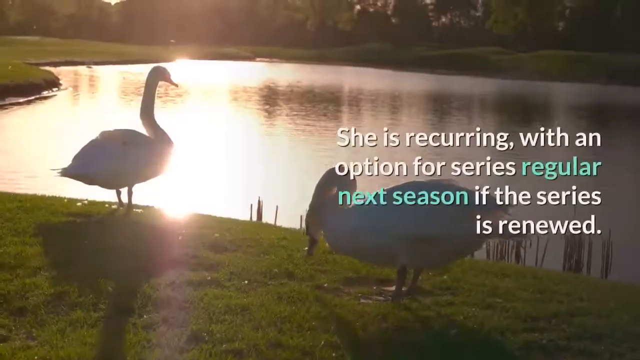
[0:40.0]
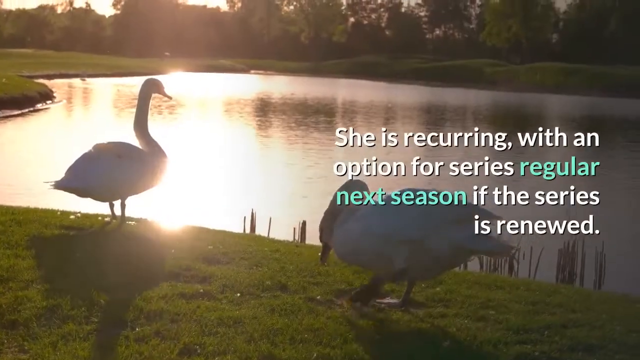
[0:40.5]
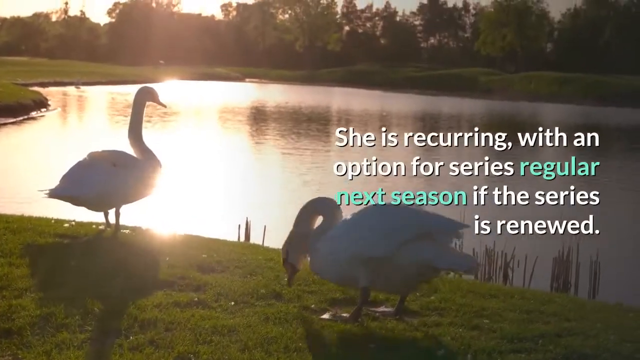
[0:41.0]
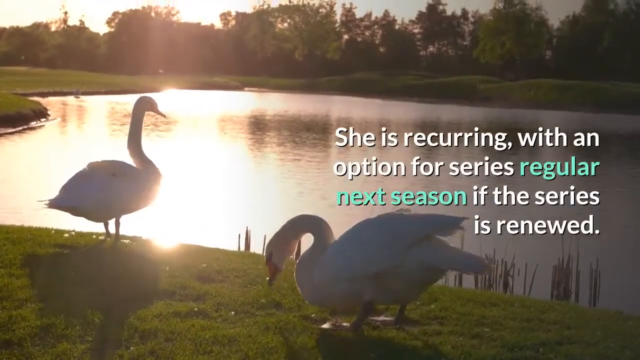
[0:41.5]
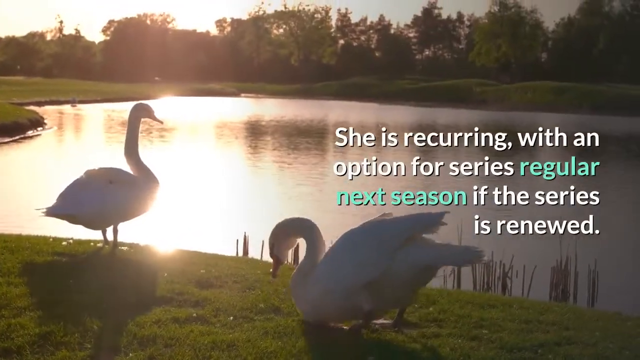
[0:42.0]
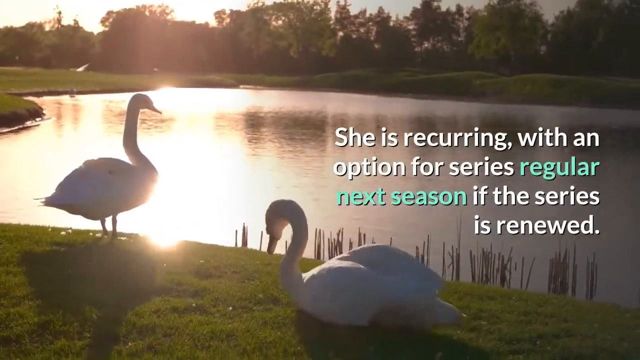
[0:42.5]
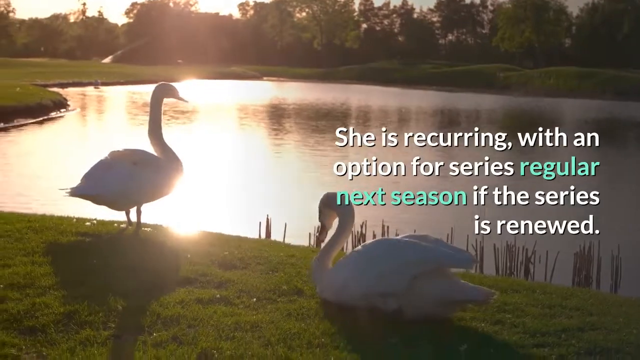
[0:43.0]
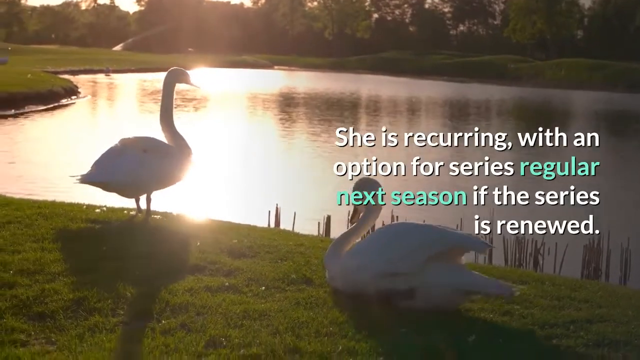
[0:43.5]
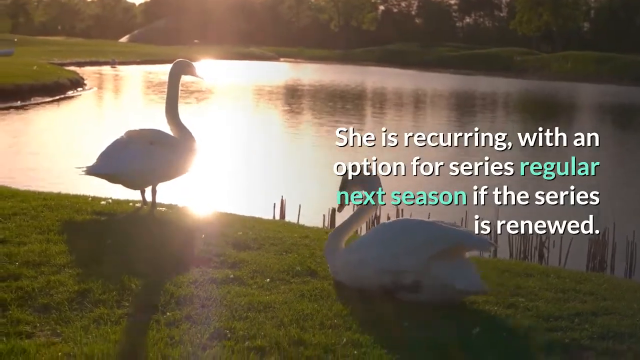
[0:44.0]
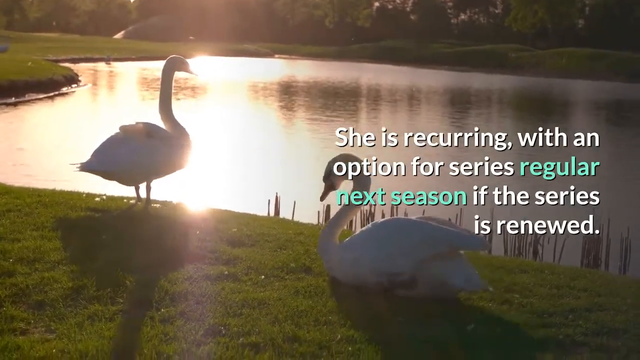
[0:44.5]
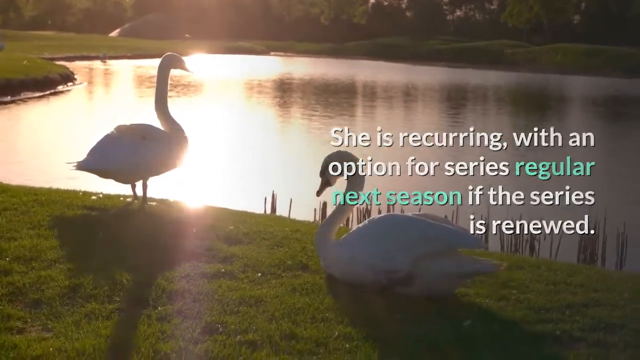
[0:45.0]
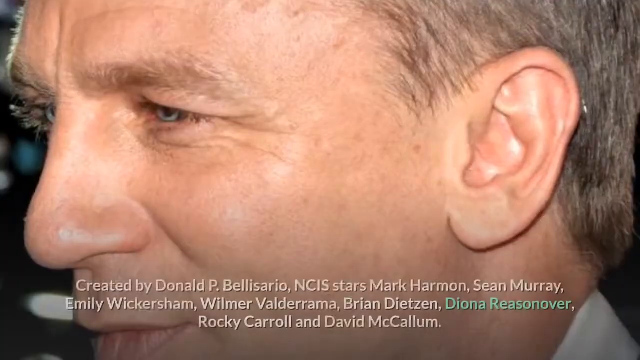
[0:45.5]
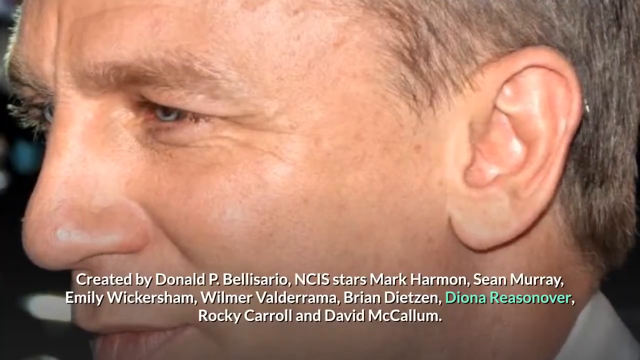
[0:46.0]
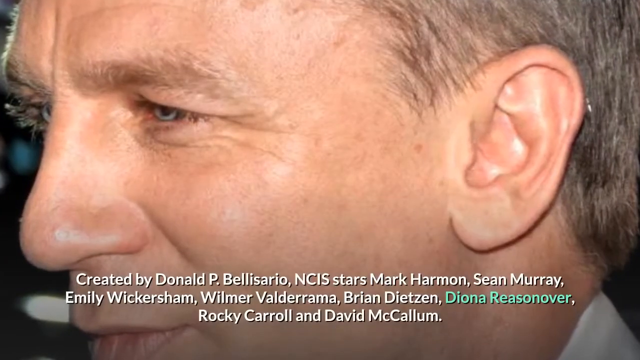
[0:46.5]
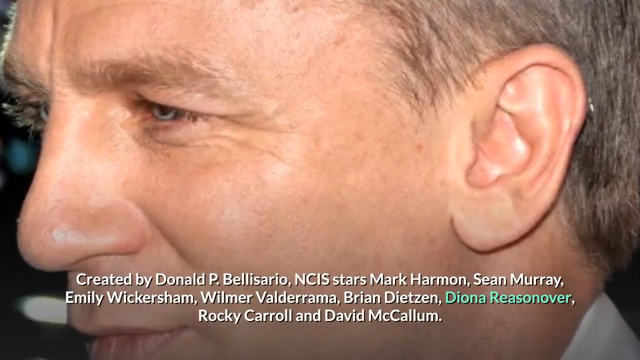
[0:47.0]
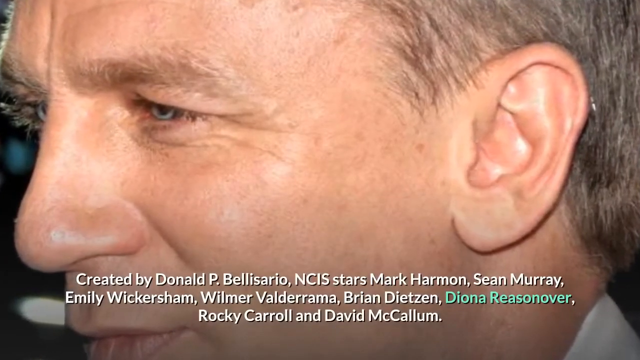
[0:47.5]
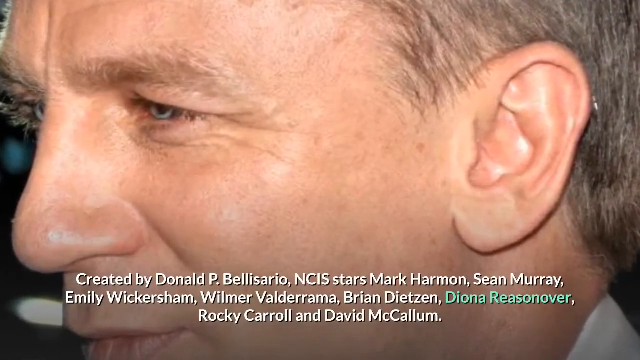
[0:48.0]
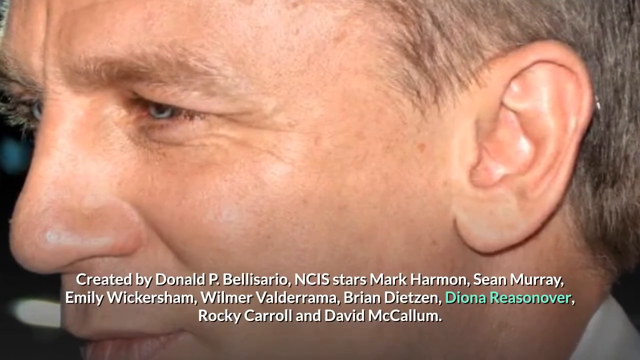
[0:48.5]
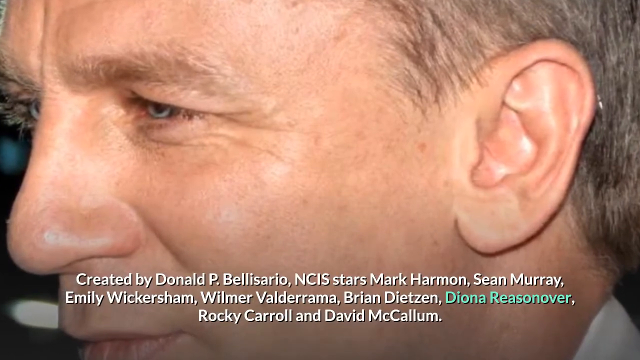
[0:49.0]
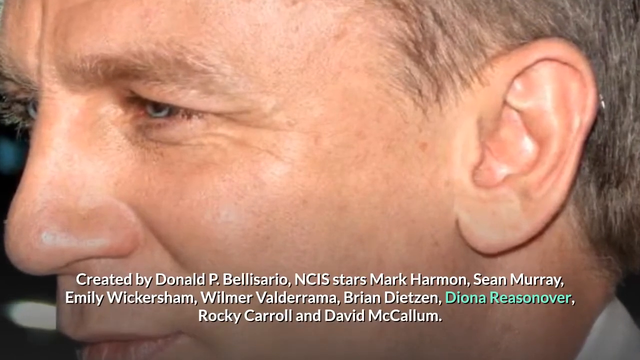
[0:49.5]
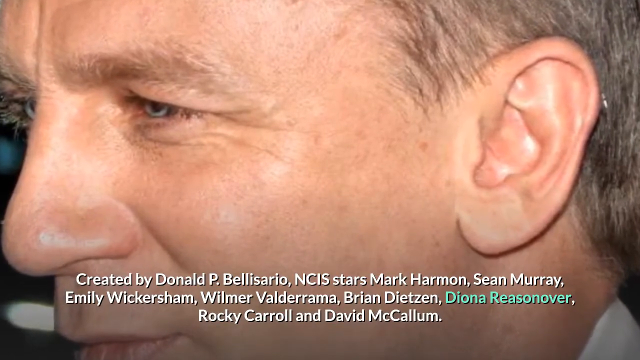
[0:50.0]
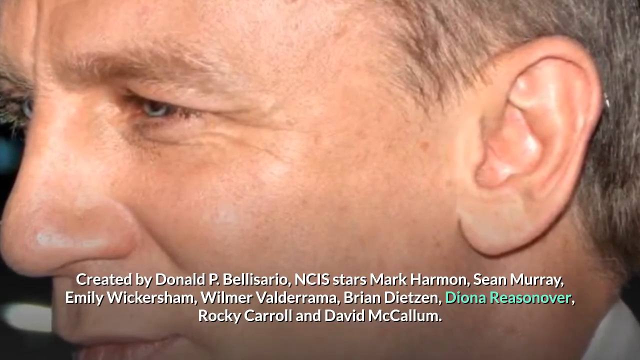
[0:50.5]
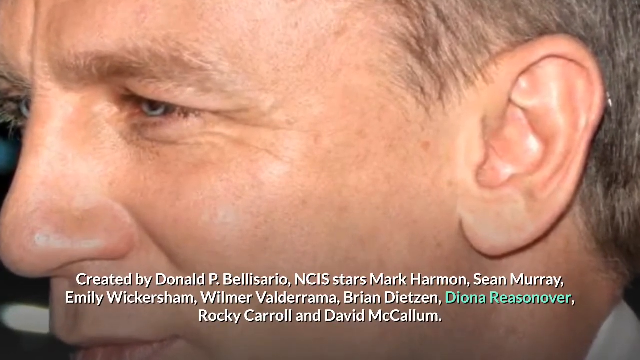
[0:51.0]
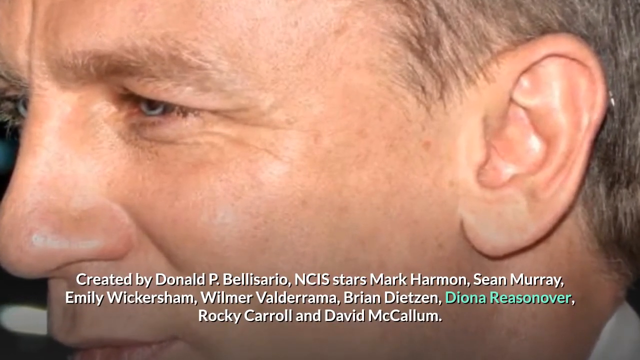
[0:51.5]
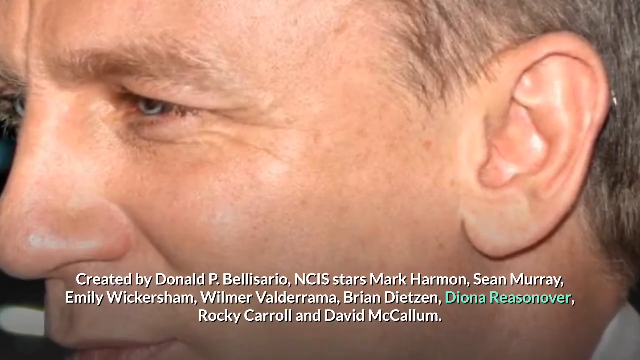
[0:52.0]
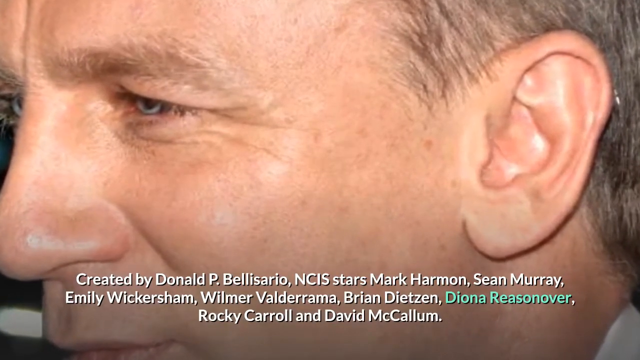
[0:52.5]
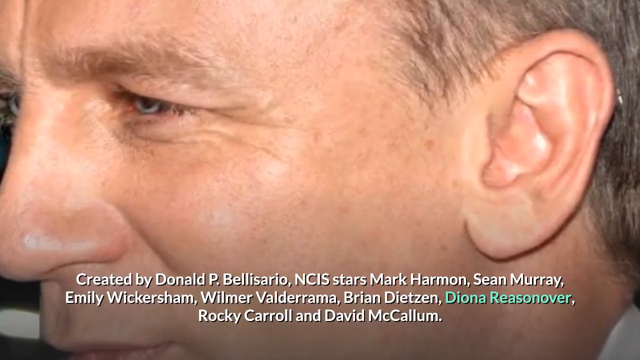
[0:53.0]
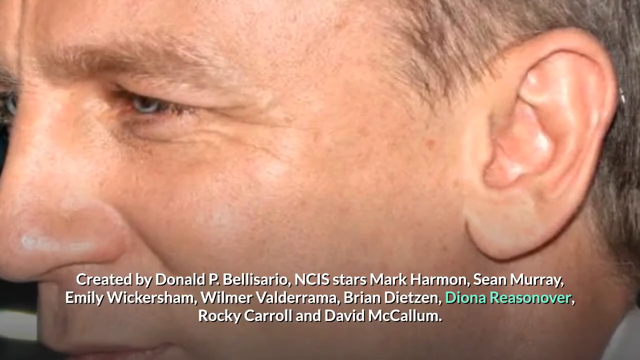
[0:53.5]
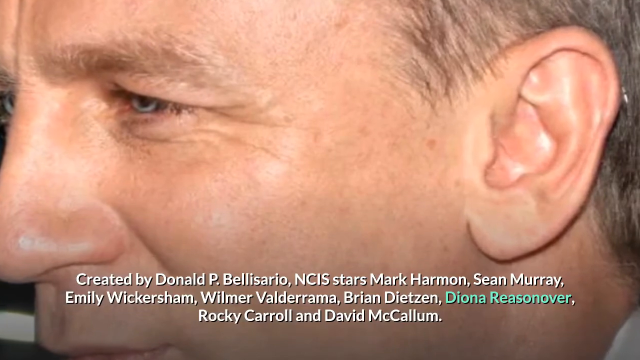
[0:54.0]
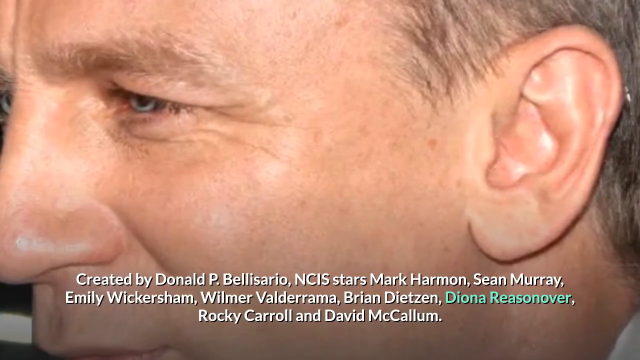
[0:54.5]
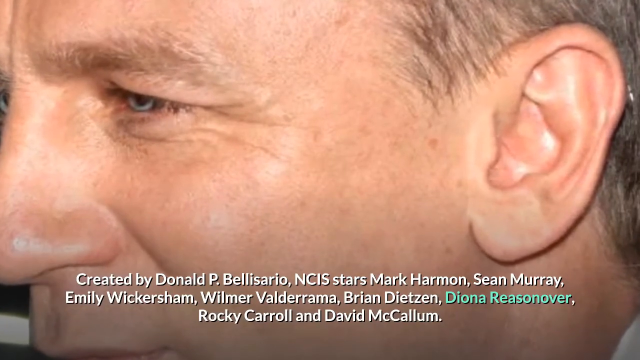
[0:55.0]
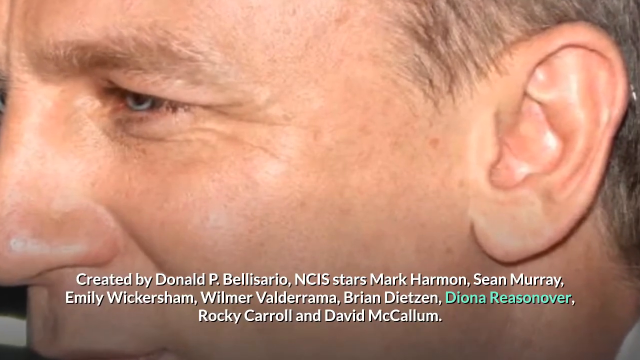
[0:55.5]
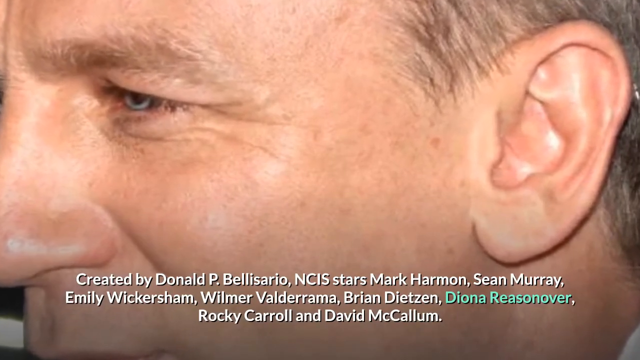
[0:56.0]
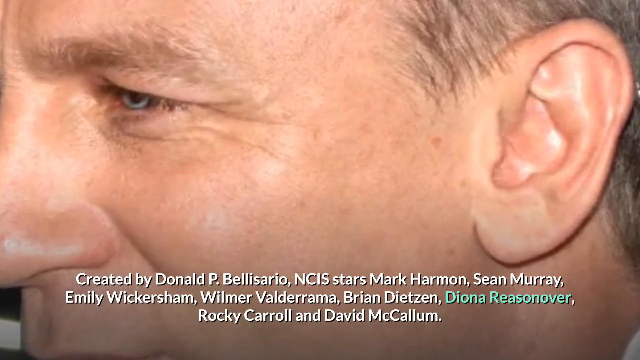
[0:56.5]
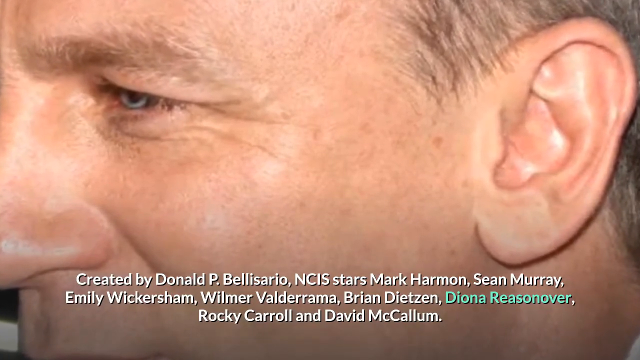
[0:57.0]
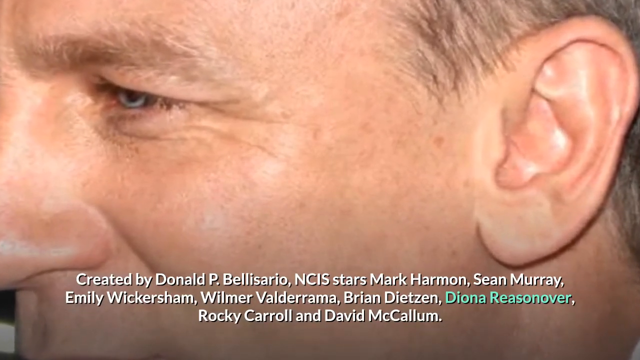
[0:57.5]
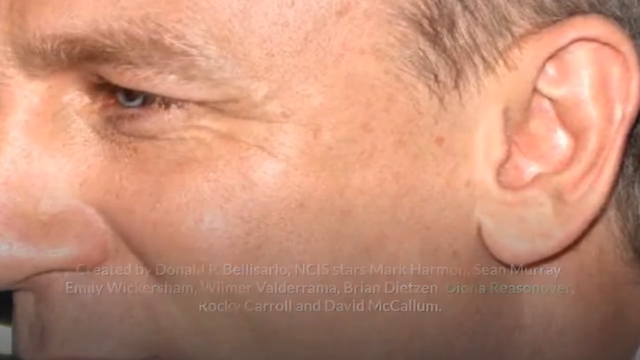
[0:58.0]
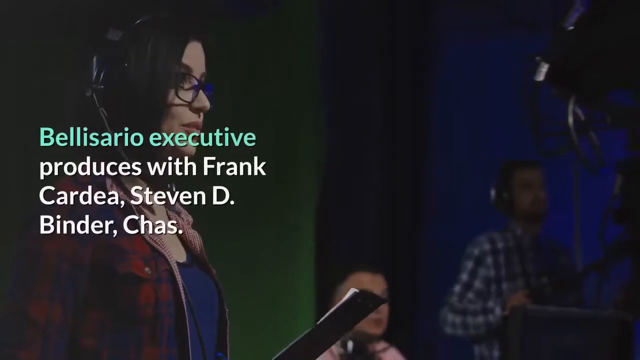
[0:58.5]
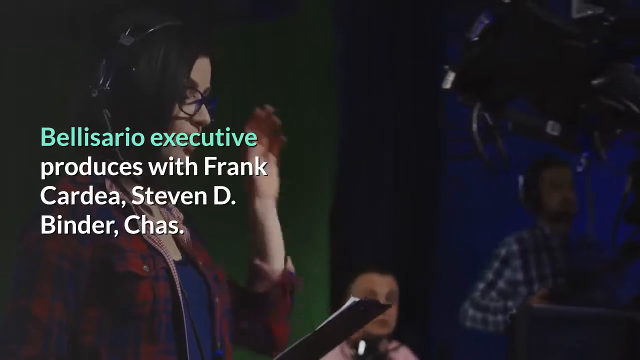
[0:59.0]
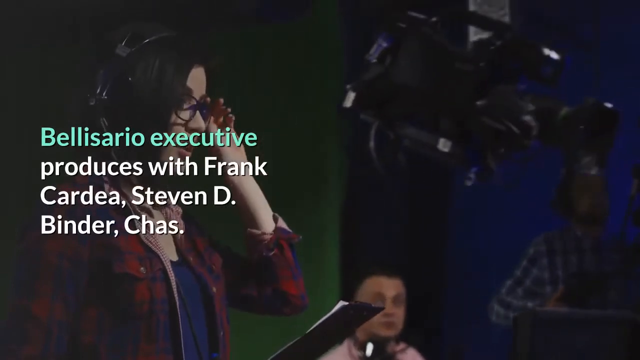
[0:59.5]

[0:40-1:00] Two swans stand on the bank of a pond, one on the right and one on the left. The one on the right looks like it has its head down, grazing on the grass, while the other stands looking out as the sun shines on the pond's surface. Eventually the swan on the right sits down on the grass. Next comes a close-up of the side of a man's head: he has green eyes and short hair, and his eyes, nose, eyebrows, cheek, ear and hair are visible. A lot of text runs along the bottom of the screen during this shot. Then a woman who looks like she is working in a news studio stands beside a camera. She wears headphones, black-rimmed glasses, and a red flannel shirt over a blue shirt. She reaches up with her left hand and looks like she is about to adjust her glasses. On-screen text reads "Belisario executive produces with Frank Cordia, Steven D. Binder, and Chaz."